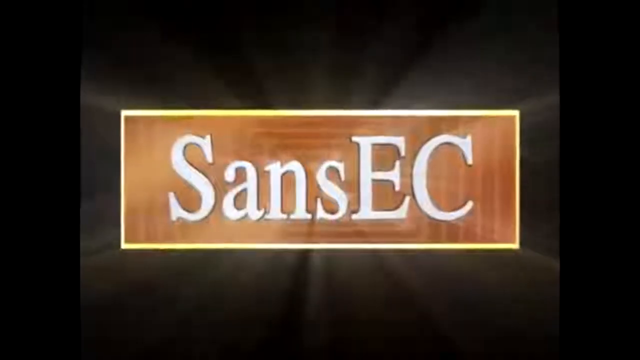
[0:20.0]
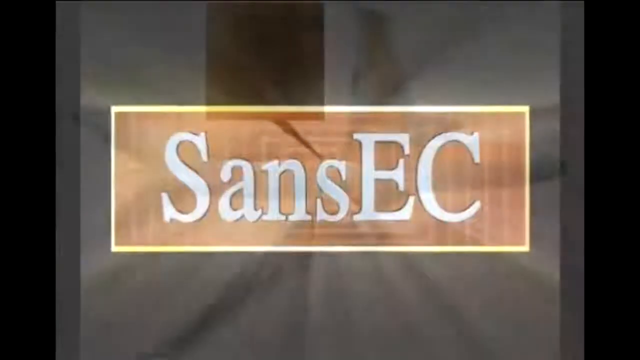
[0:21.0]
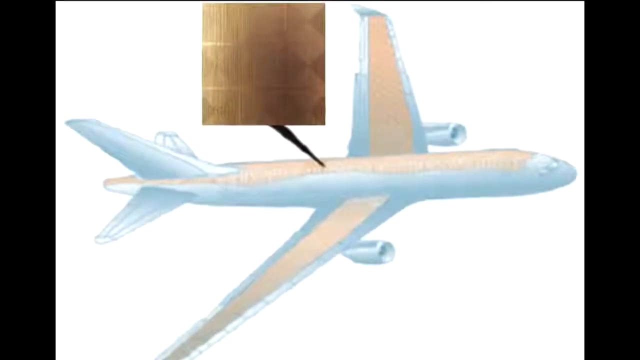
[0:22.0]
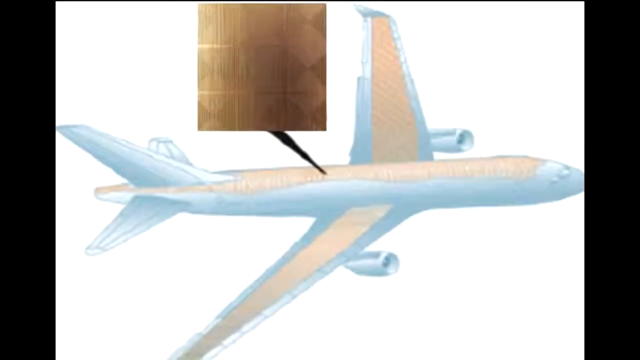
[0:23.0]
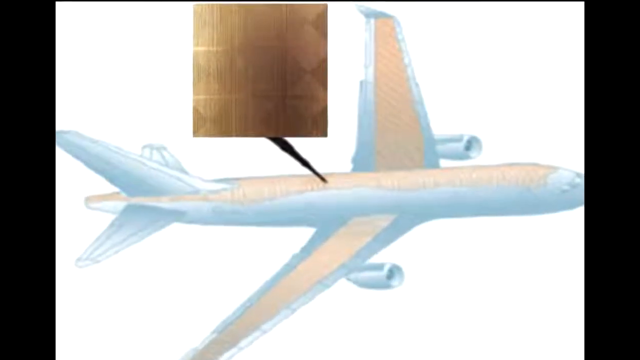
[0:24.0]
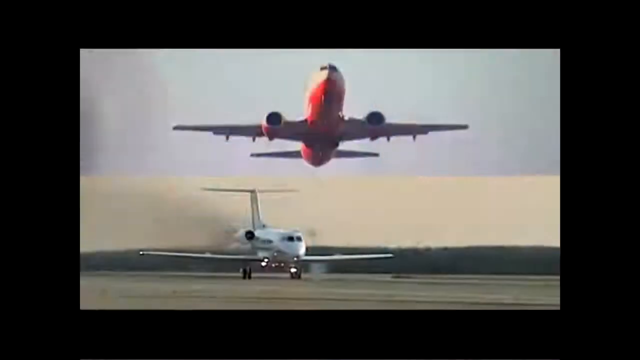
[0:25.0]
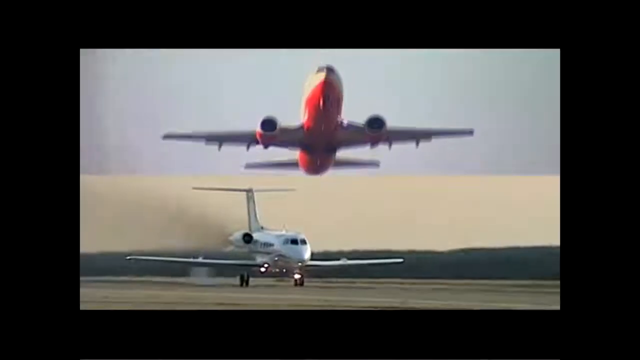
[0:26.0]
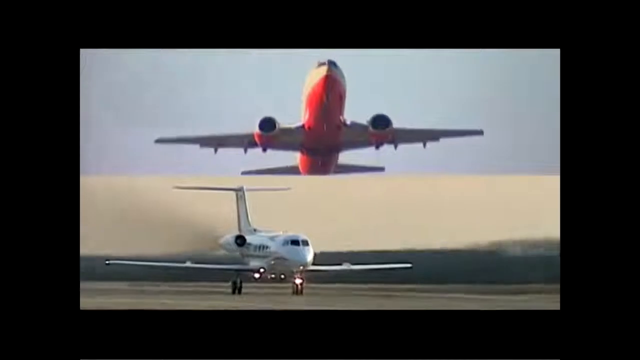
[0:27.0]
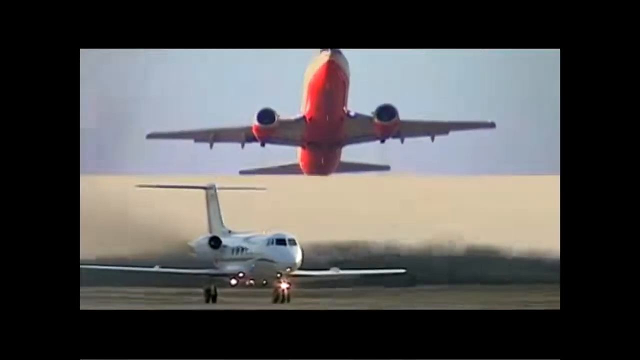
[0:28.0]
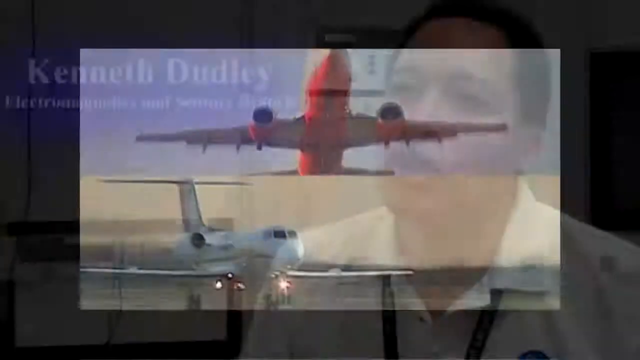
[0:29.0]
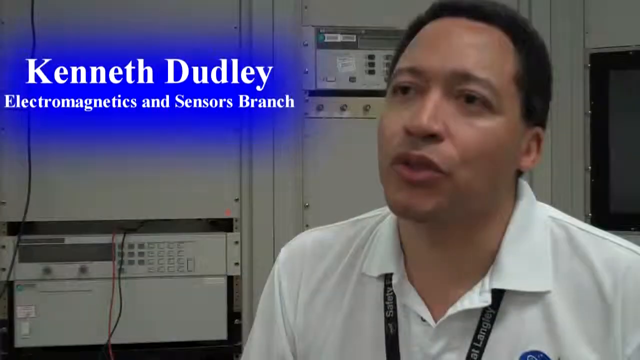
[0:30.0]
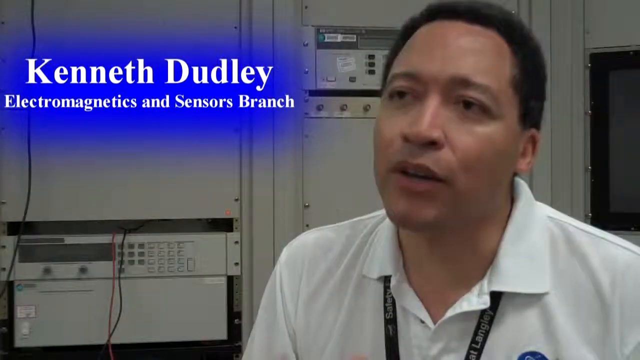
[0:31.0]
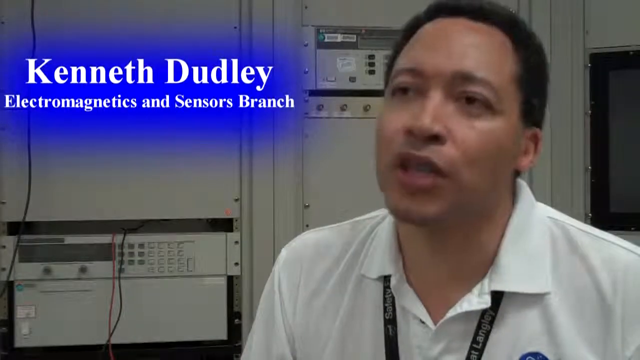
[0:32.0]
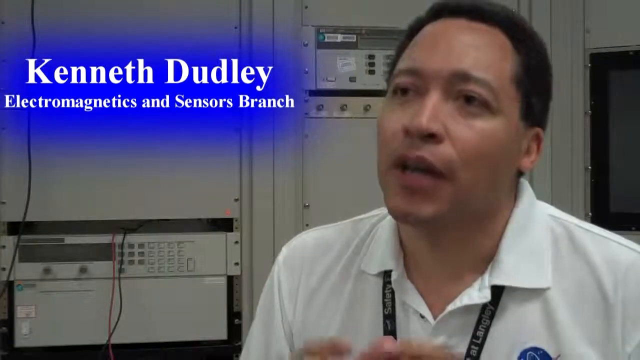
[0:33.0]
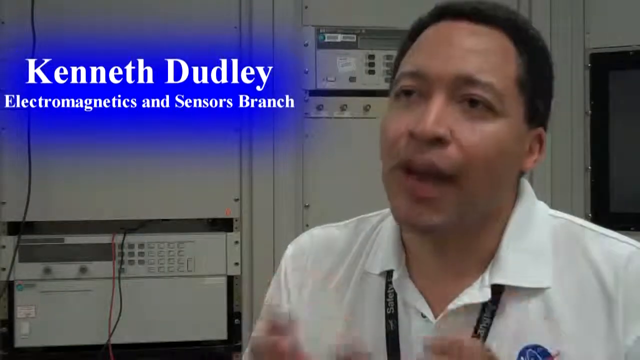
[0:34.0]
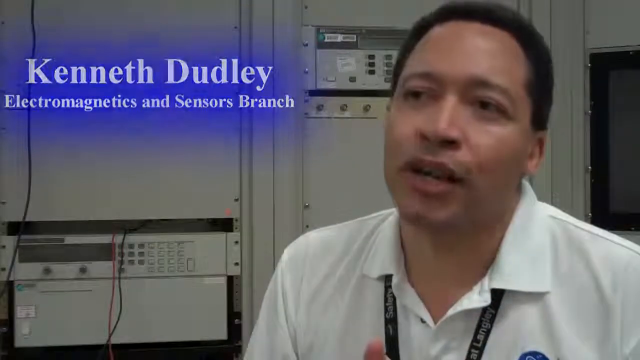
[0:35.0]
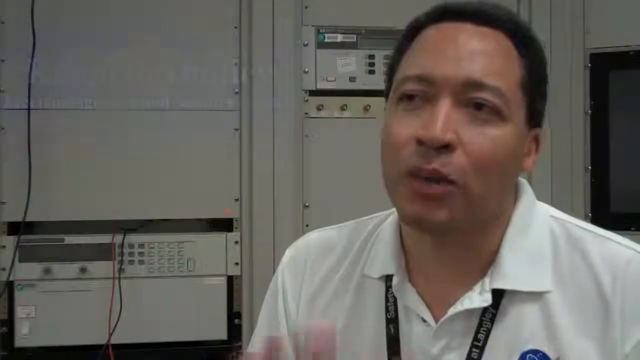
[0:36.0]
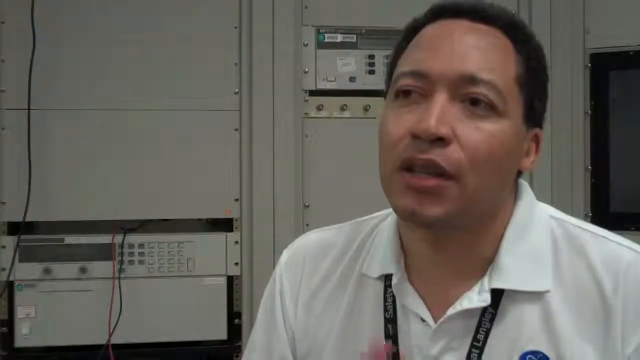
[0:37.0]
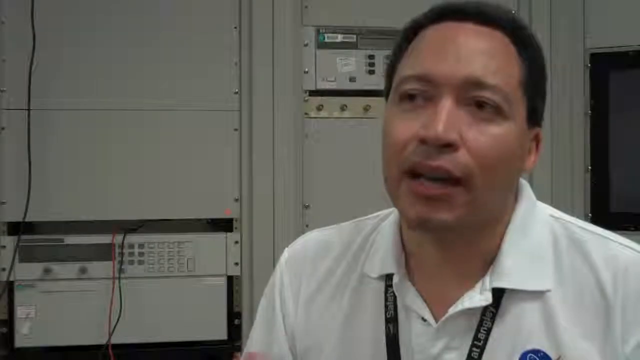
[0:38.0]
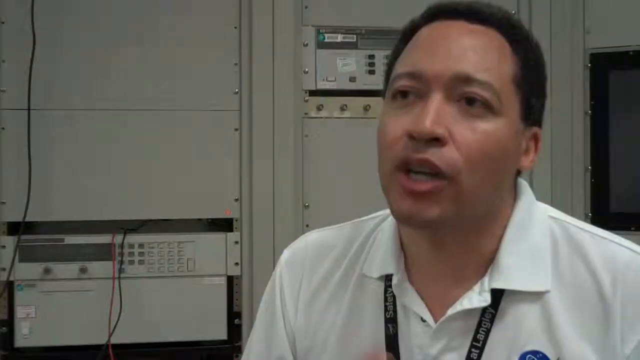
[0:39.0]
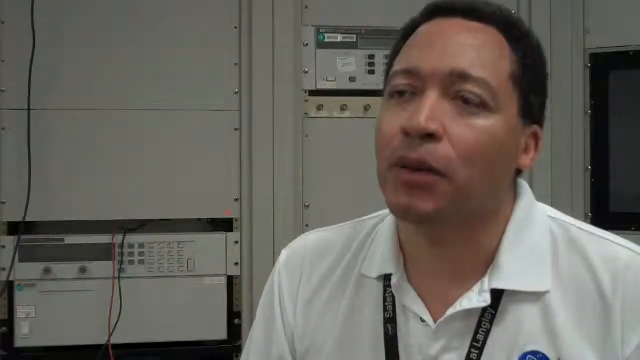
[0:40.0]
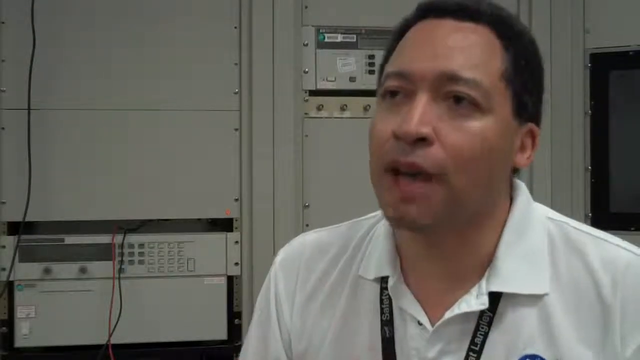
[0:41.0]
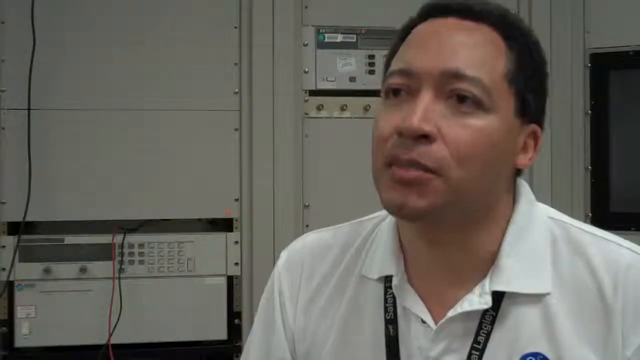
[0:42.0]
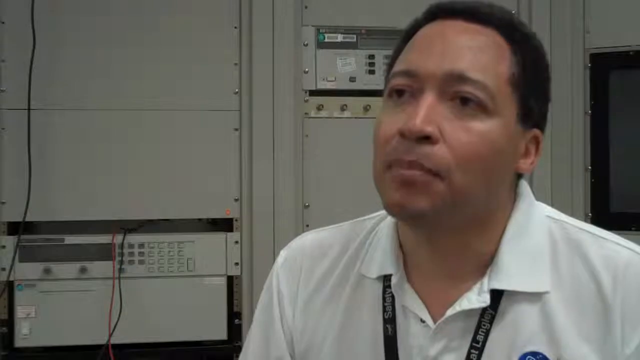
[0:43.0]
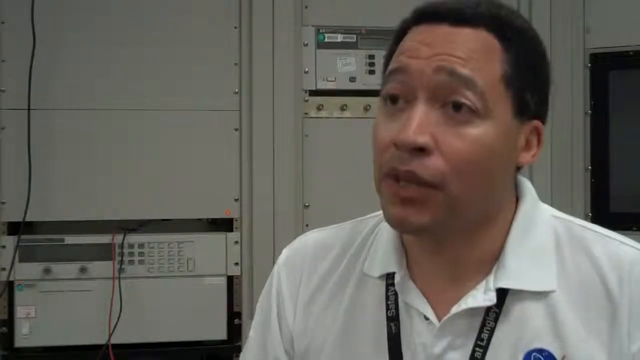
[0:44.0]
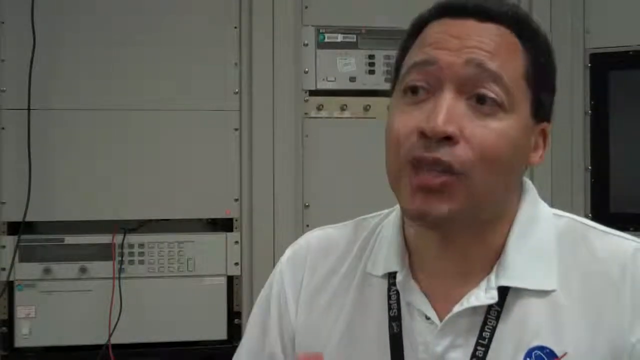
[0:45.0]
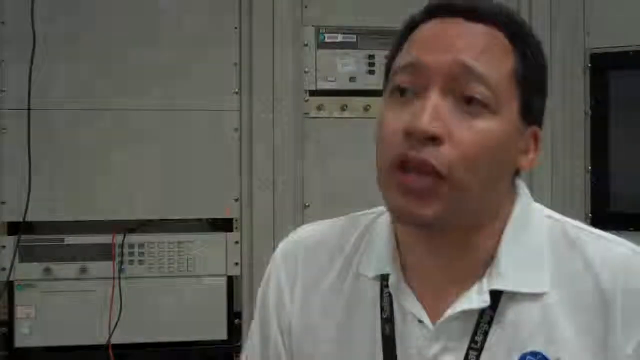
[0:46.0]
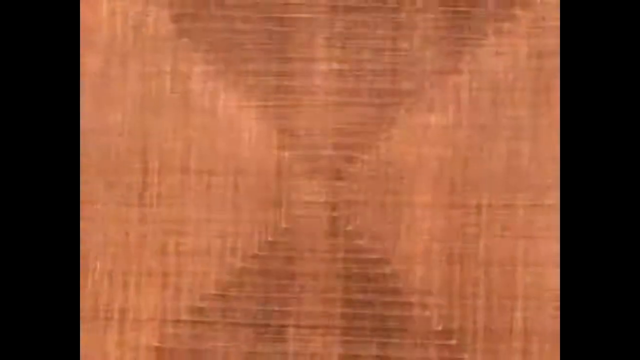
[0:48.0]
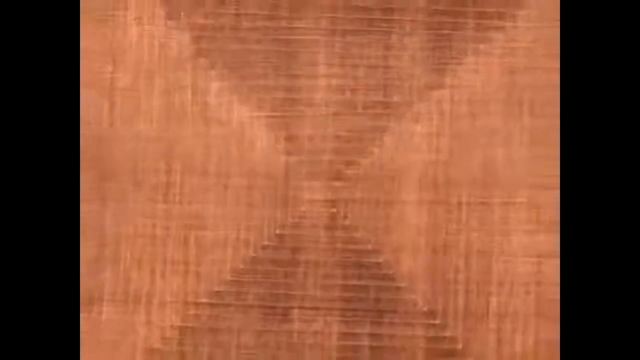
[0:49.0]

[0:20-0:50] The technology gateway introduction for the multiple lighting protection and detection system for aerospace vehicles appears, and then the camera pans across the quad at NASA. Space images, pictures of people responsible for the work, and images of aerodynamics are shown. An individual named Kenneth Dudley, who is in charge of electromagnetics, is interviewed. He looks fairly young, apparently in his late 30s. He appears to be in a laboratory, probably his lab, and seems to be wearing a white polo with something that is possibly a tie, an untied tie, or a lanyard, maybe for his badge. He is talking and answering questions. There is a sign reading "SANSEC".